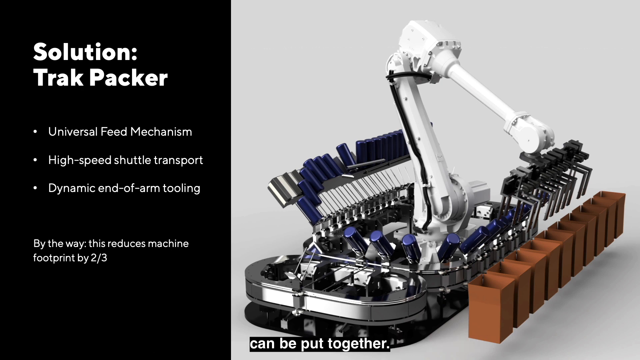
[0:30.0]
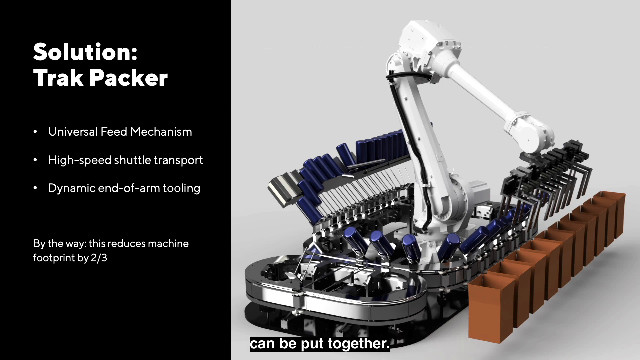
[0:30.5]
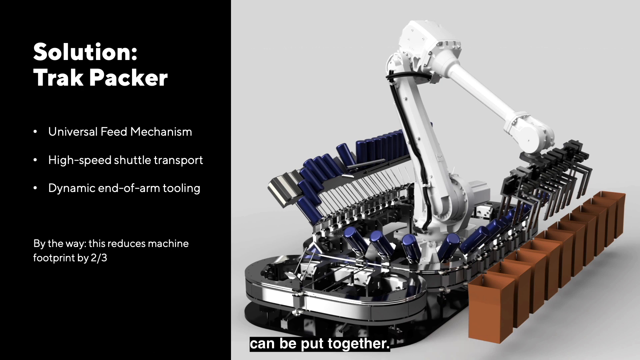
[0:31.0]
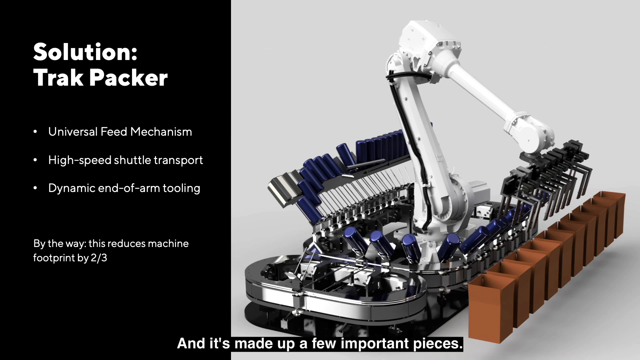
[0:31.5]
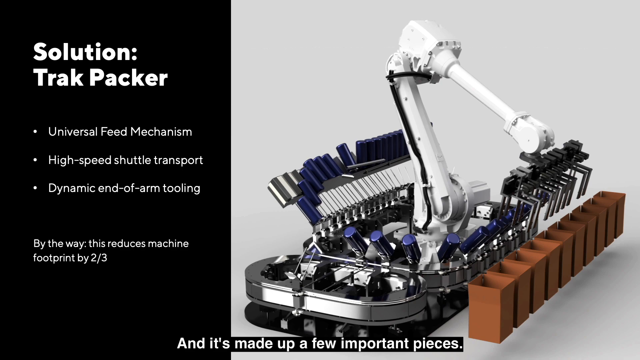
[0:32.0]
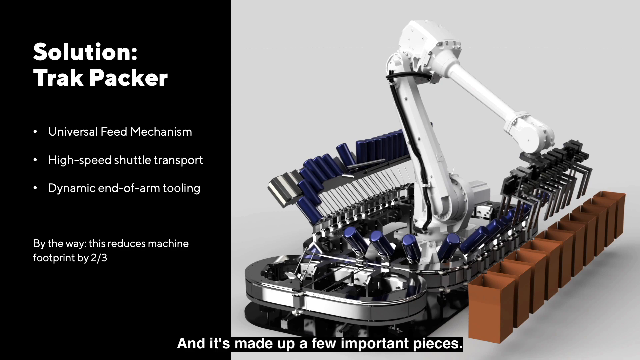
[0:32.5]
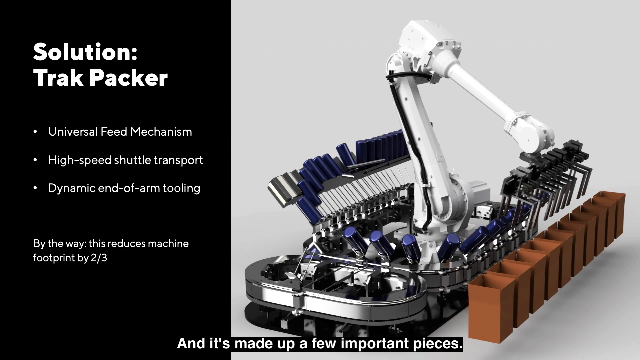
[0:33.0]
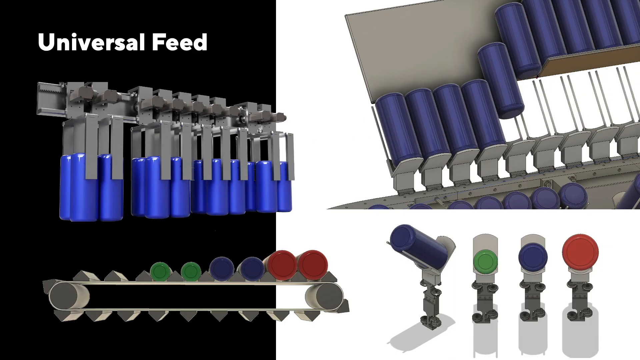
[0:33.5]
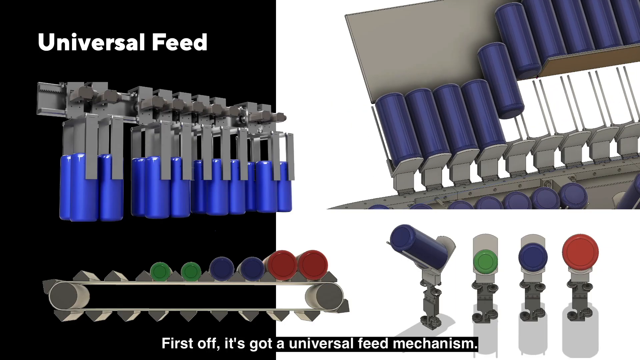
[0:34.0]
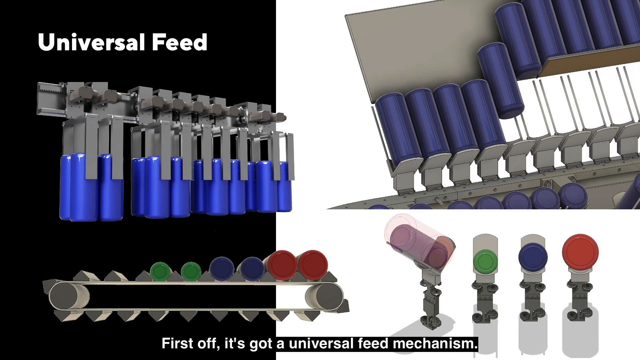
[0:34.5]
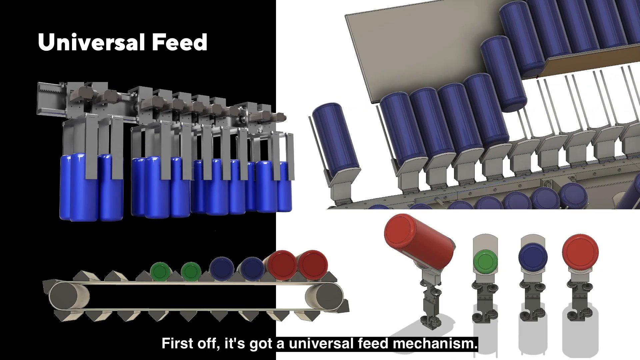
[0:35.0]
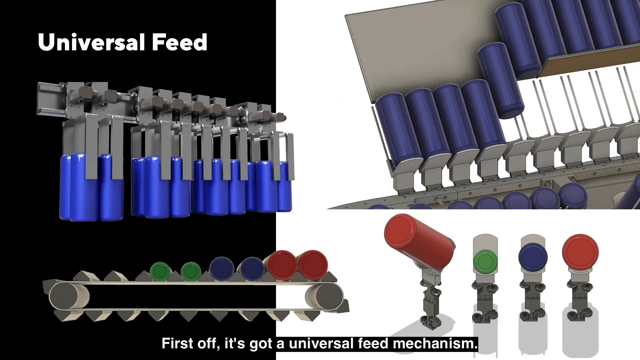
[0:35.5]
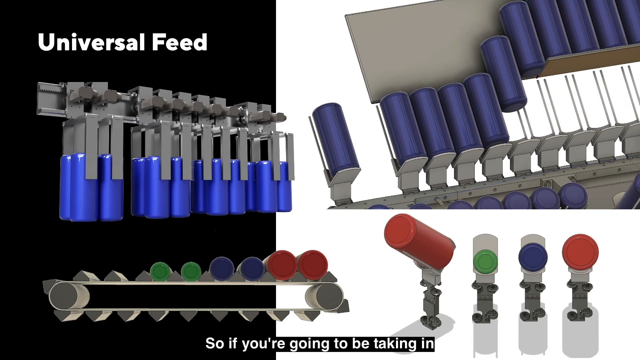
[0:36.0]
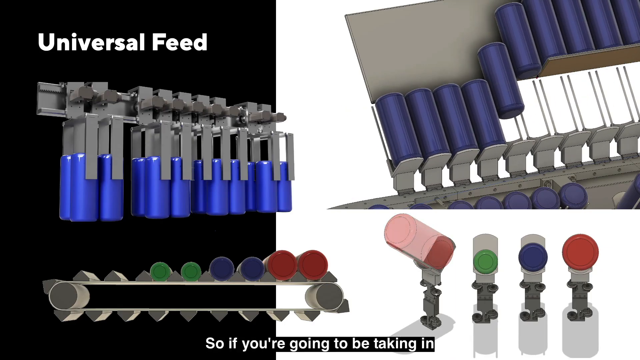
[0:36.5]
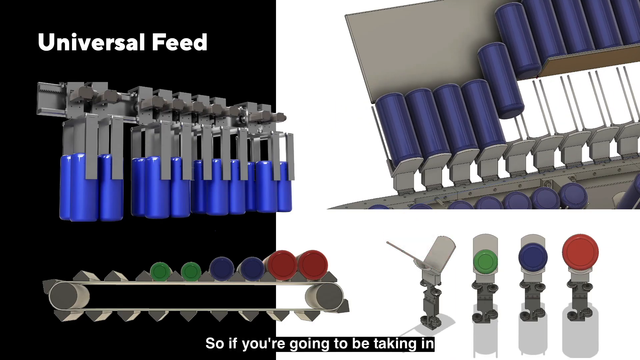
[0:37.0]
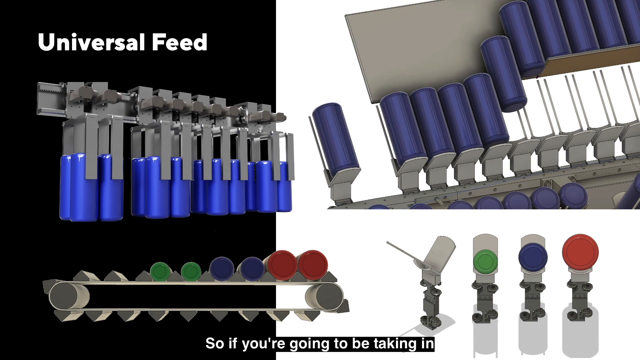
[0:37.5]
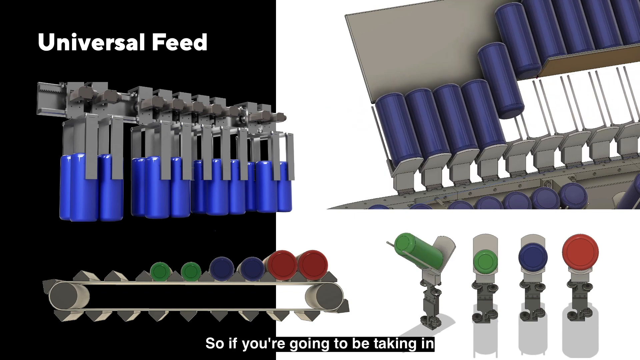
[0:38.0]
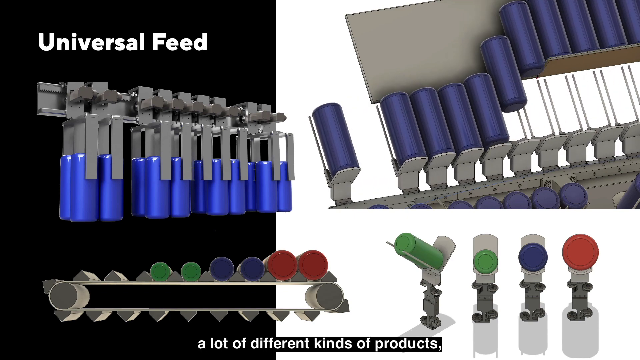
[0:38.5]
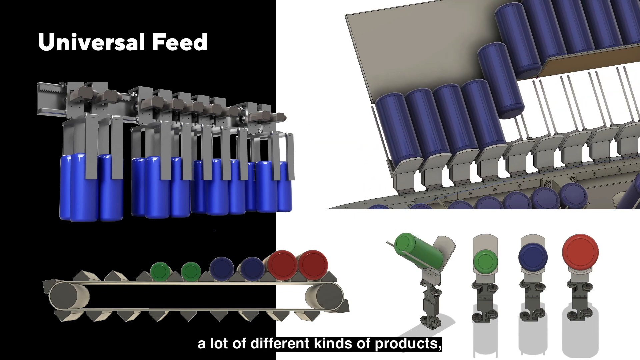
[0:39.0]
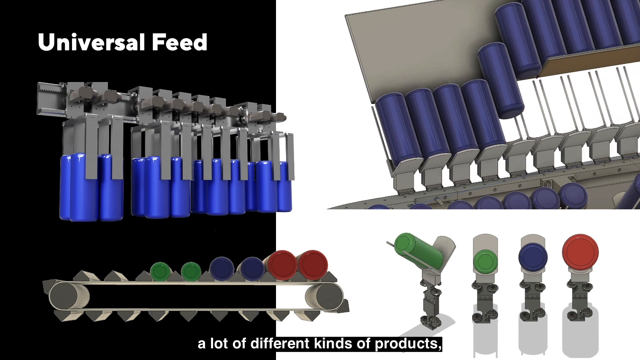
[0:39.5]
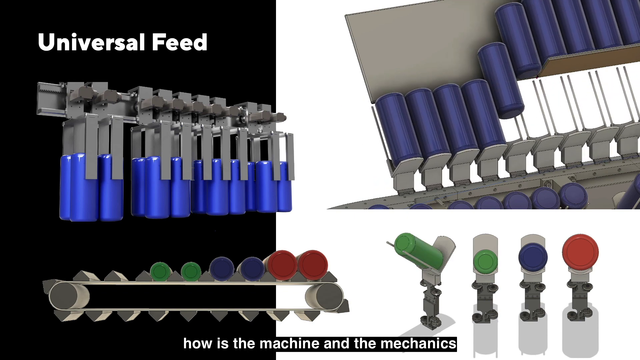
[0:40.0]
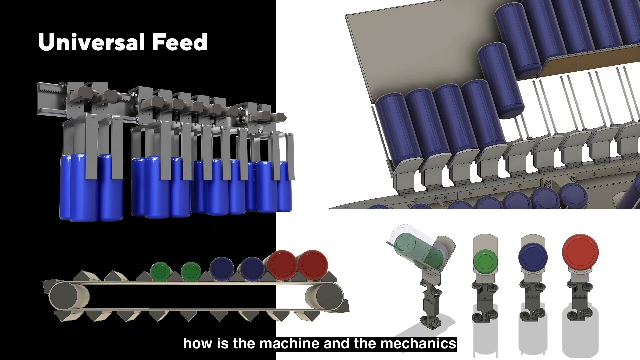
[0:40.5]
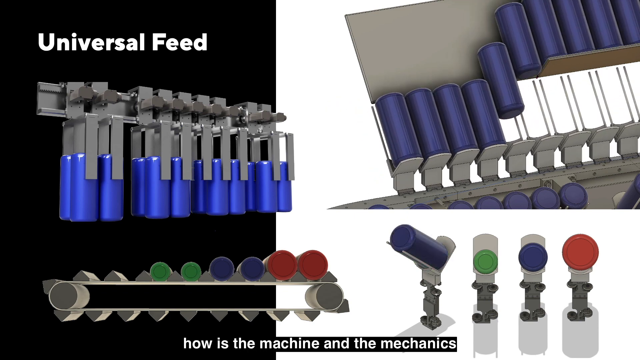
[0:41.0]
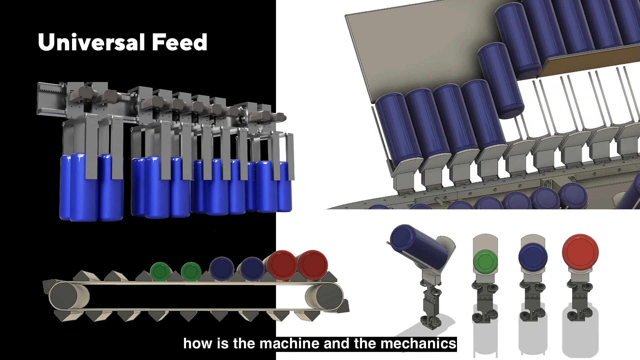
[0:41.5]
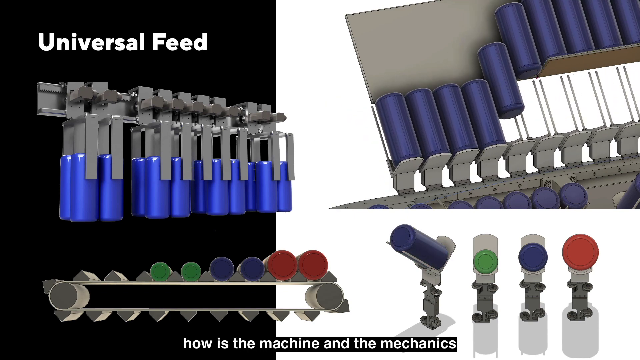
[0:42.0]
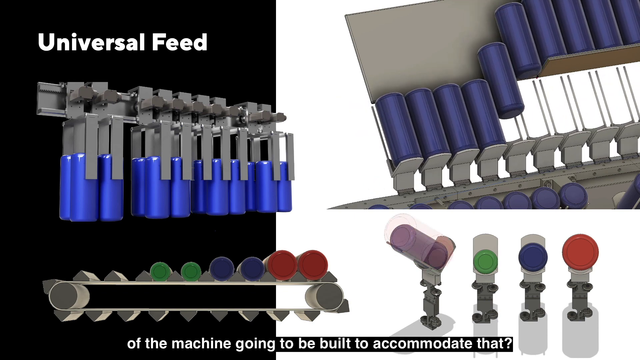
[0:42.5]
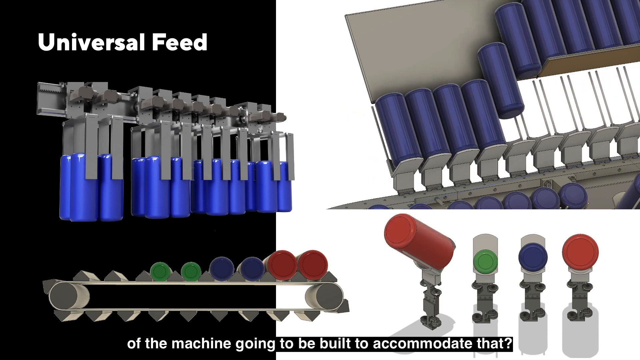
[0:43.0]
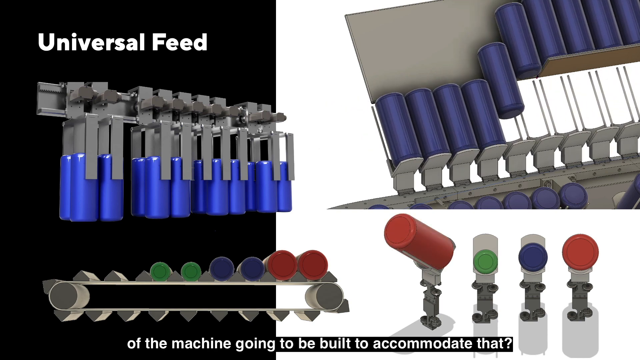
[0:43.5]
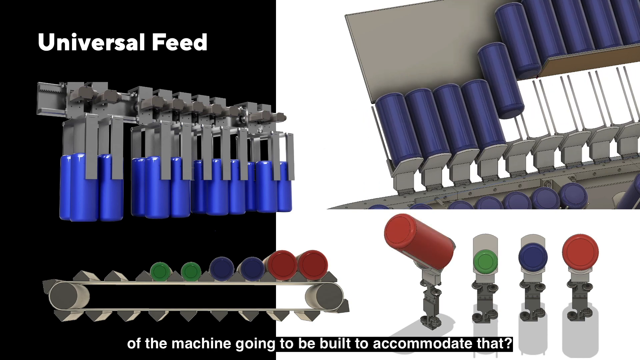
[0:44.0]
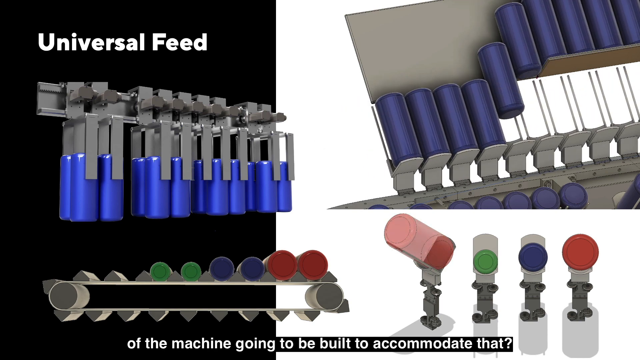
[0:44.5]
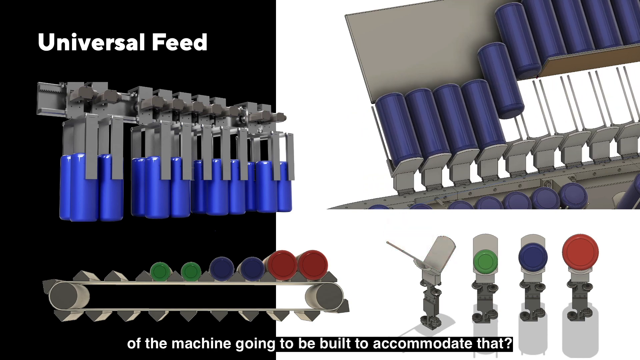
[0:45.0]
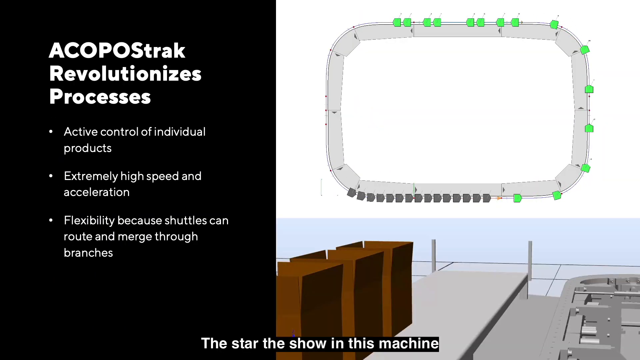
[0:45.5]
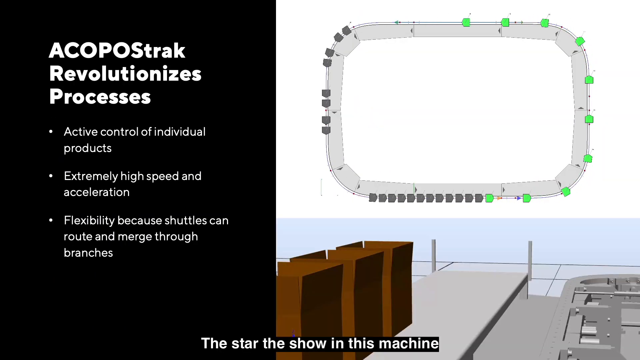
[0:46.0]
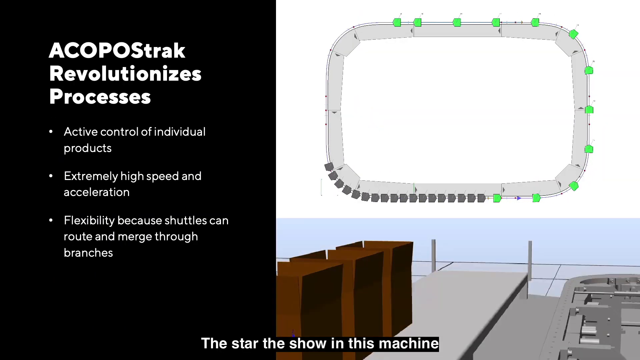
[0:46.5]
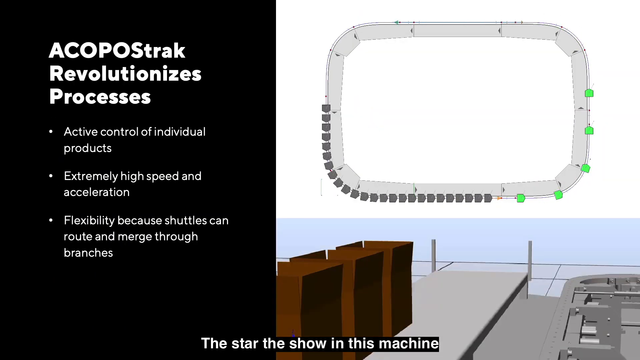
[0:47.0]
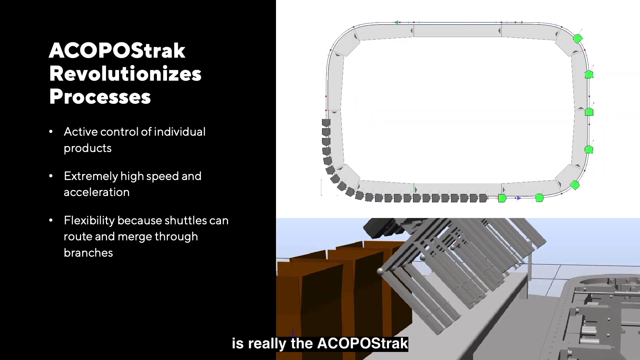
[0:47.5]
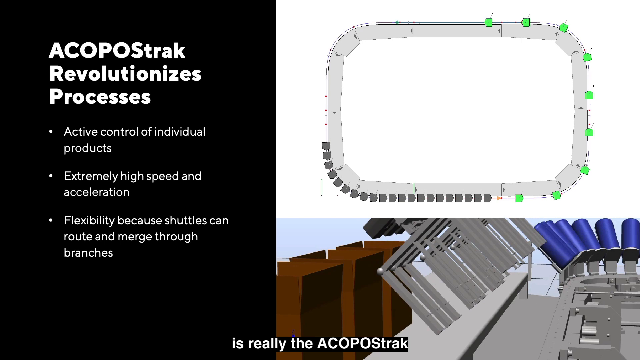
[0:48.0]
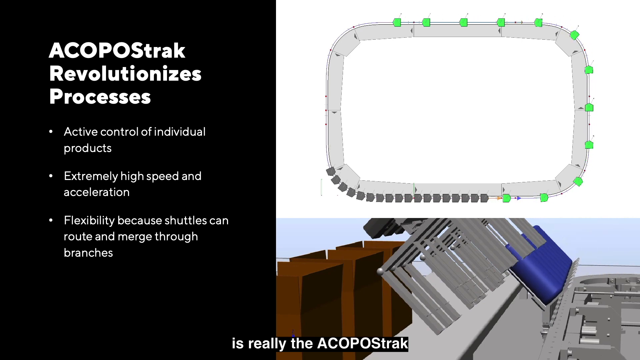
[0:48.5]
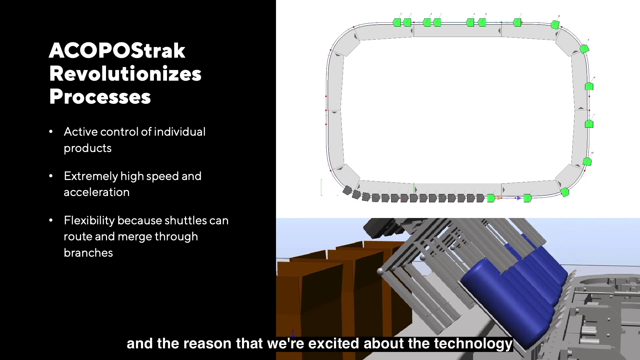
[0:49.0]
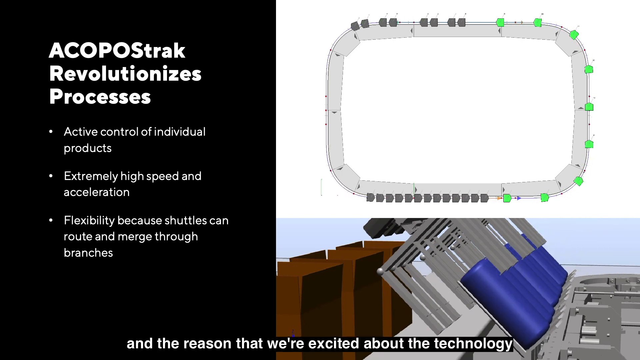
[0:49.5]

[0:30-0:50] The screen with the Trackpacker machinery and its universal feed mechanism continues. An animation labeled "universal feed" then shows the same kind of cylinders being fed into another machine; blue cylinders go around in a circle and are fed into the machine. Text reads "Active control of individual products, extremely high speed and acceleration flexibility because shuttles can route and merge through branches." Cylinders of different colors and different sizes are shown being fed in, possibly with different functions.